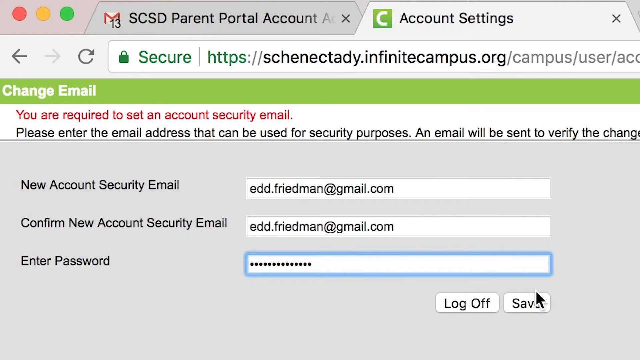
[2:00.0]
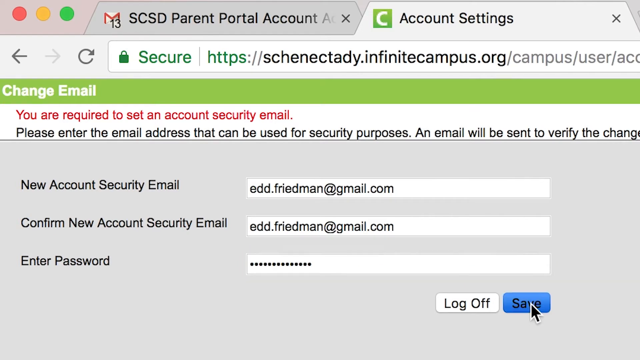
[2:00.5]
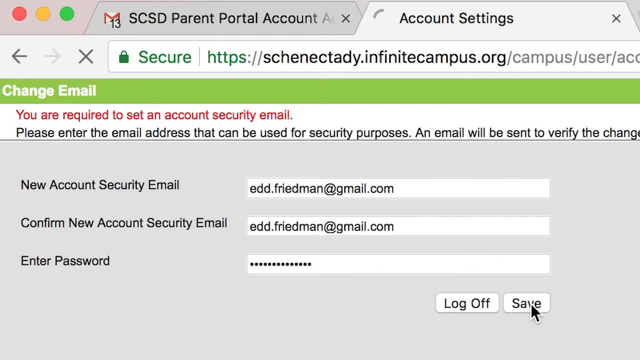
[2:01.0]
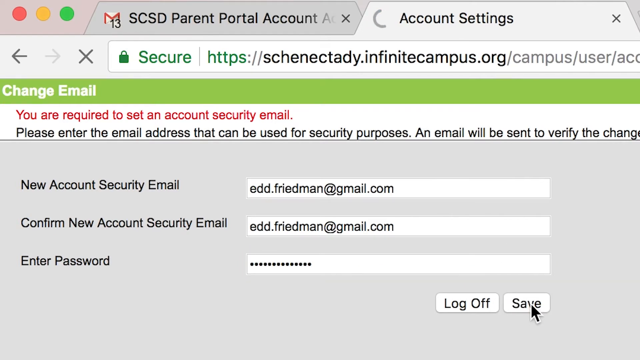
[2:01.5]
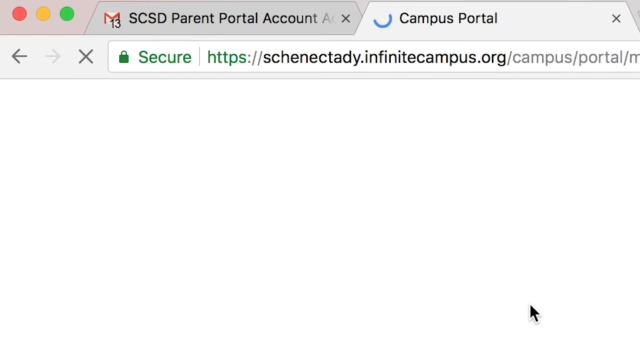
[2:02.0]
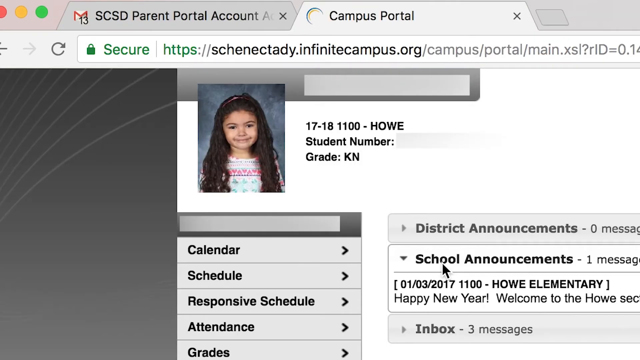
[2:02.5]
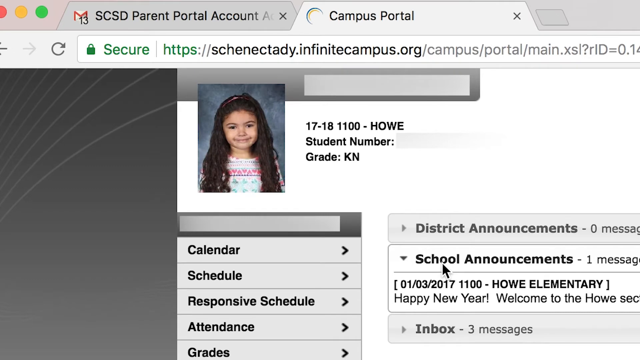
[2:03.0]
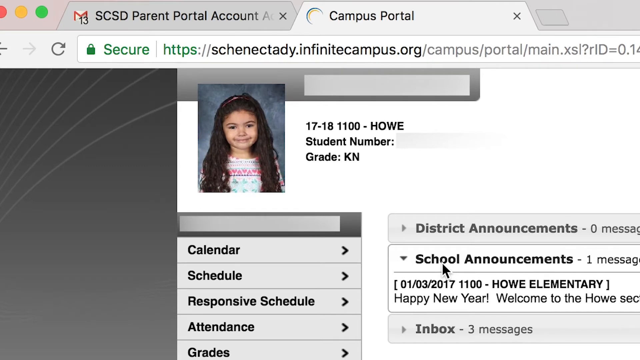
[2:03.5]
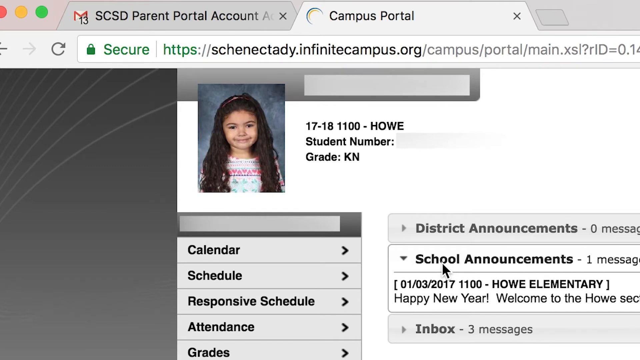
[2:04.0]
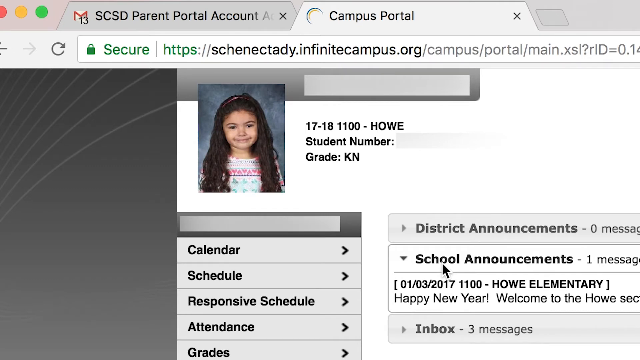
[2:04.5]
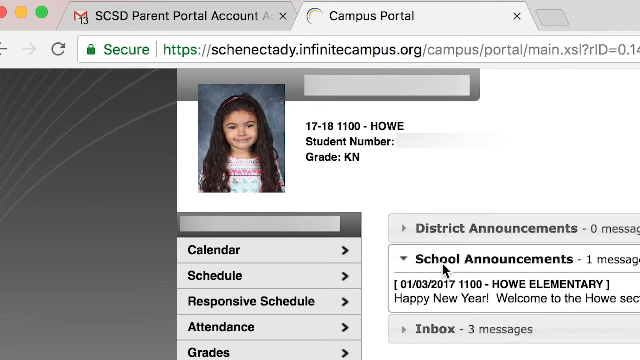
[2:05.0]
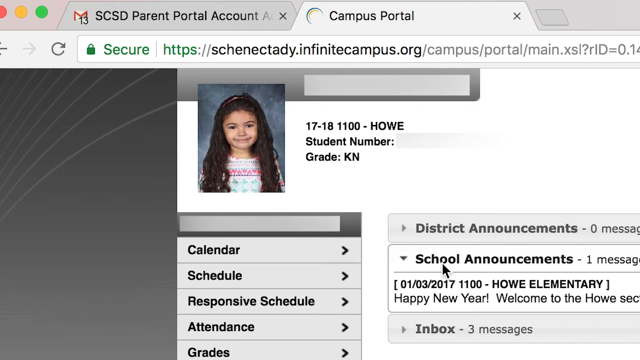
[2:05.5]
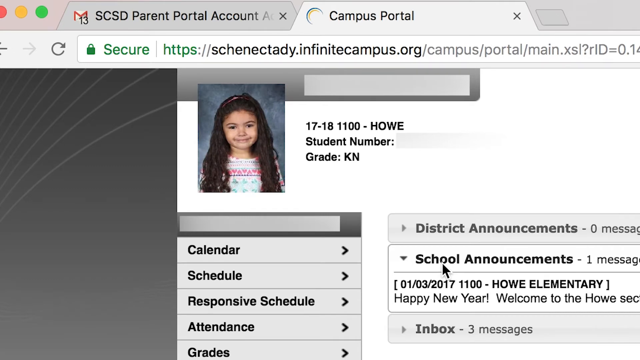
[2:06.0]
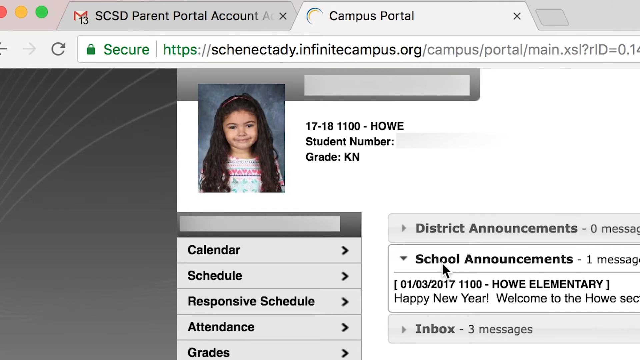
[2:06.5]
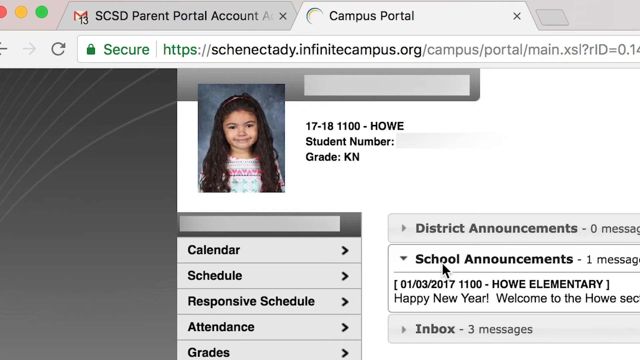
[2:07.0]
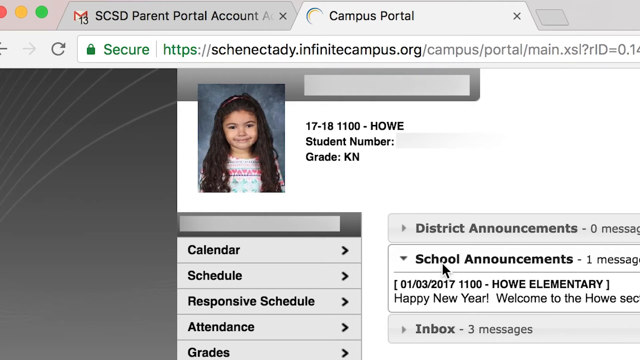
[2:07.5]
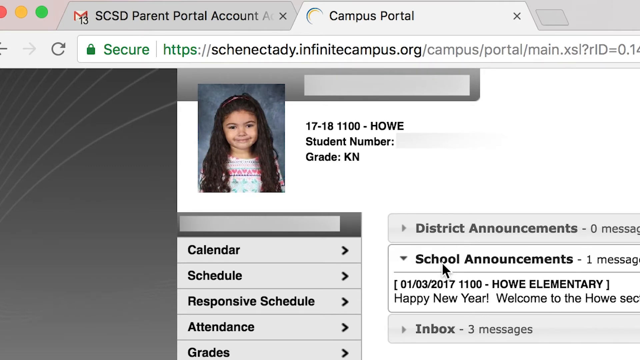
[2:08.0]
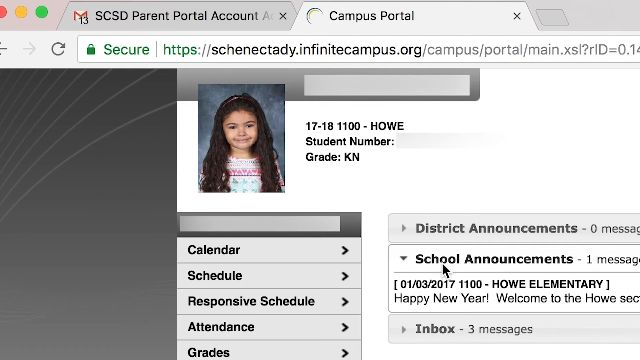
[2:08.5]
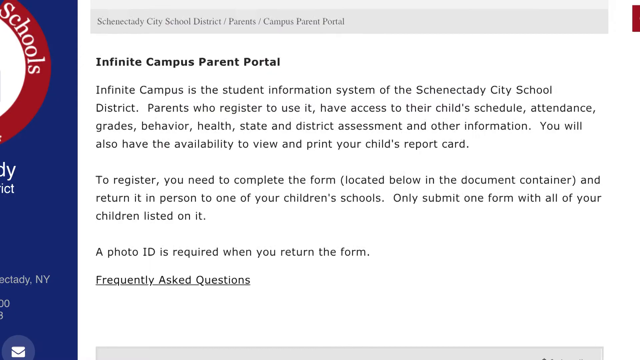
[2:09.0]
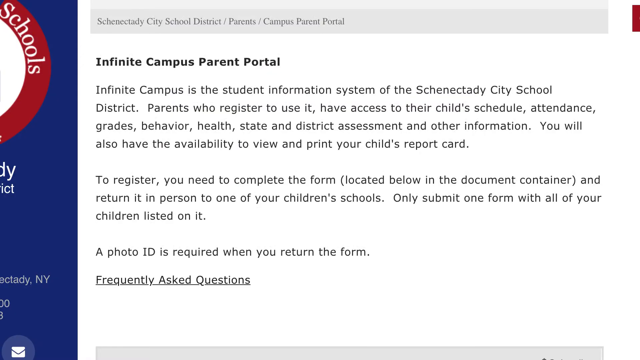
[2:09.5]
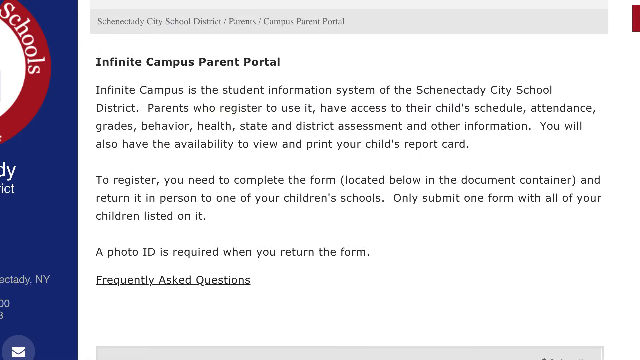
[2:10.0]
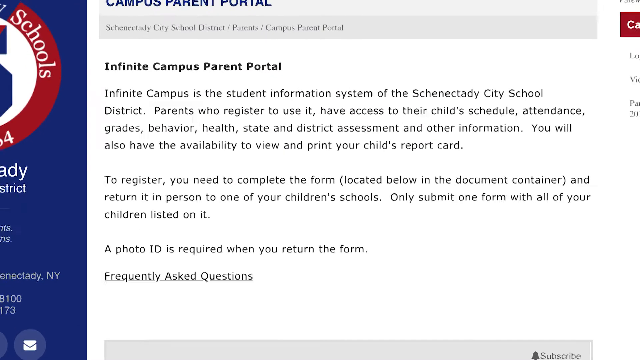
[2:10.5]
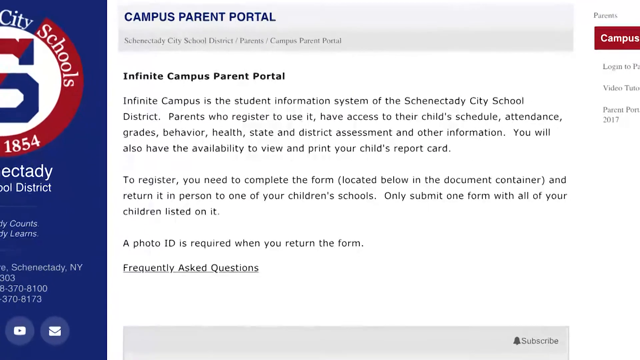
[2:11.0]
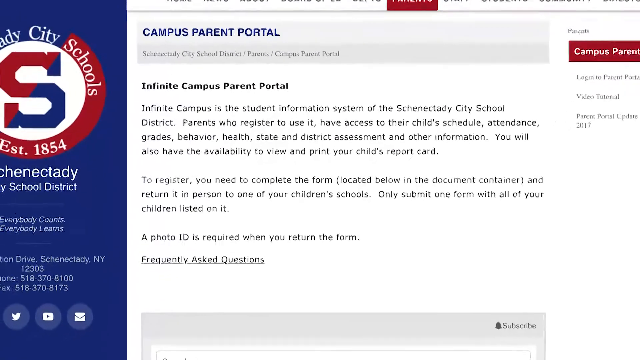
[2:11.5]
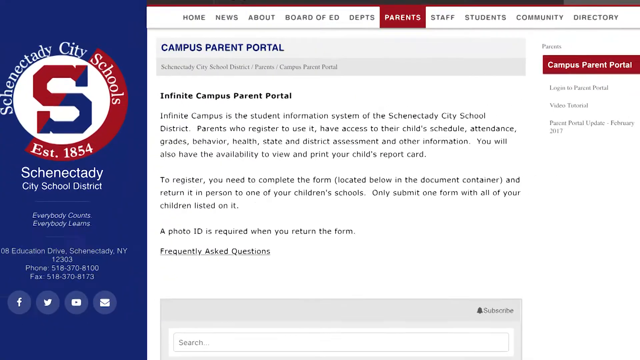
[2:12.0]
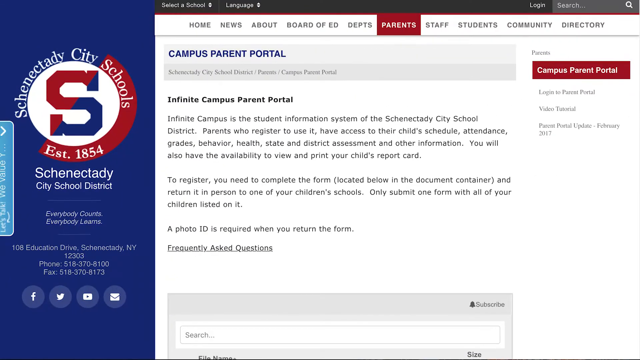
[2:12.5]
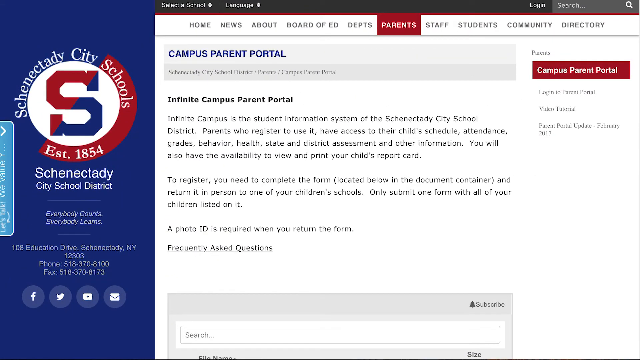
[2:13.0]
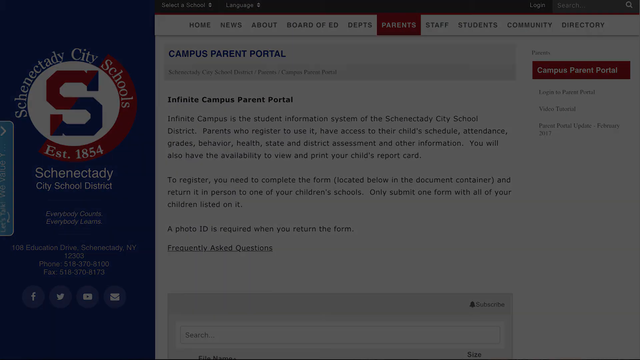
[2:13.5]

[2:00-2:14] A login screen says "SCSD Parent Portal Account" at the top, with an X to the right of it. The page that is open says "Account Settings," and to the left is also "Account Settings." There is a green square with a white C in it. Below that is the URL bar, which says "secure," and to the right "https://schenectady.infinitecampus.org/campus/username." Below that it says "change the email," and below that, in red, that an account security email is required to be set. There is "account security email" with "email" to the right, then "confirm new account security email" with "email" to the right, and below that the password. The mouse pointer goes to the save button and clicks save. A screen appears with a picture of a little girl and the text "17-18-1100-how." It then goes to white and back to the home screen, and the screen turns black.